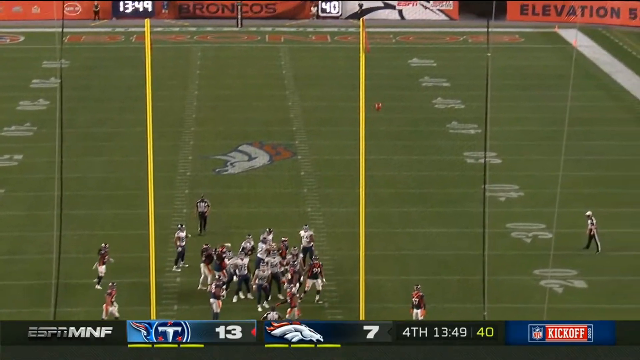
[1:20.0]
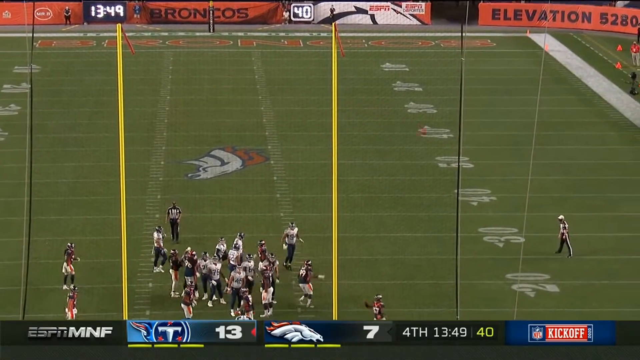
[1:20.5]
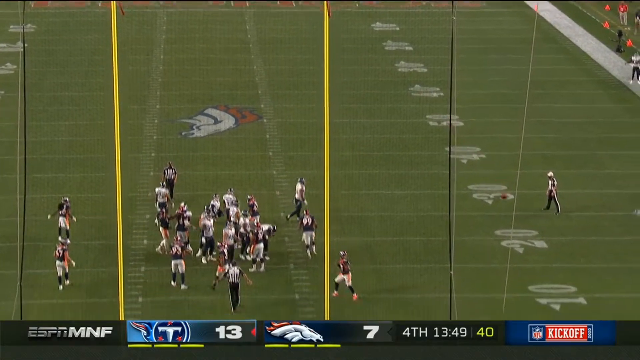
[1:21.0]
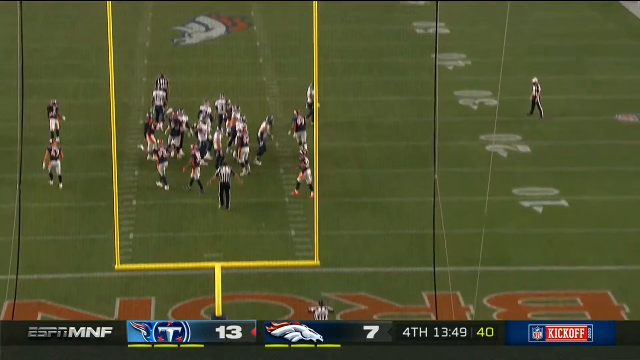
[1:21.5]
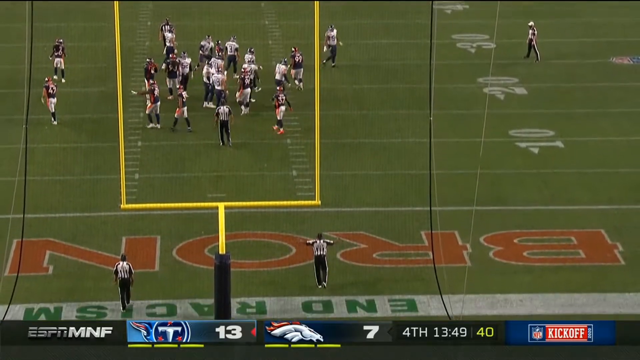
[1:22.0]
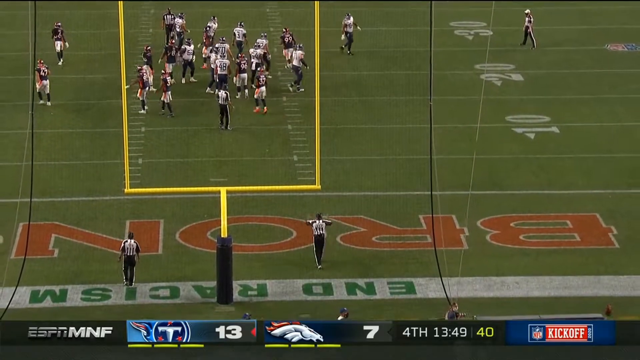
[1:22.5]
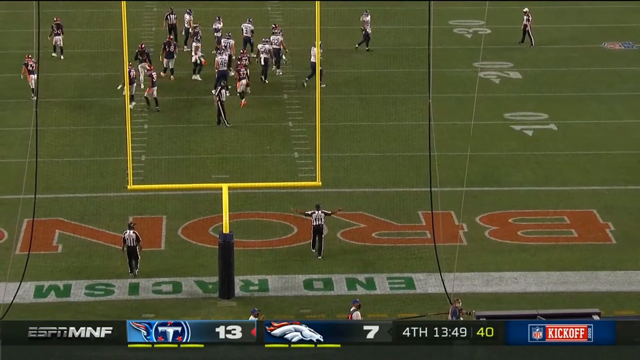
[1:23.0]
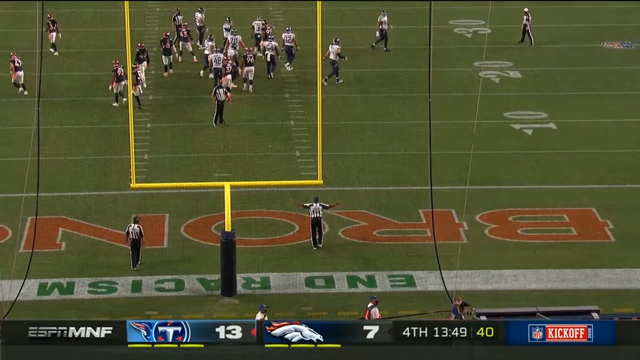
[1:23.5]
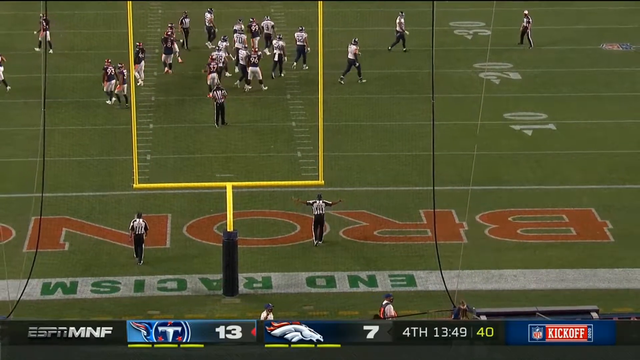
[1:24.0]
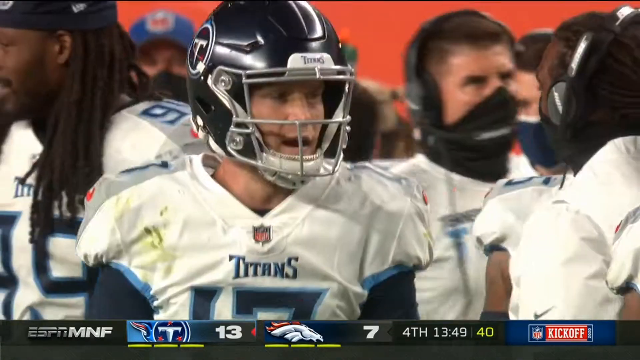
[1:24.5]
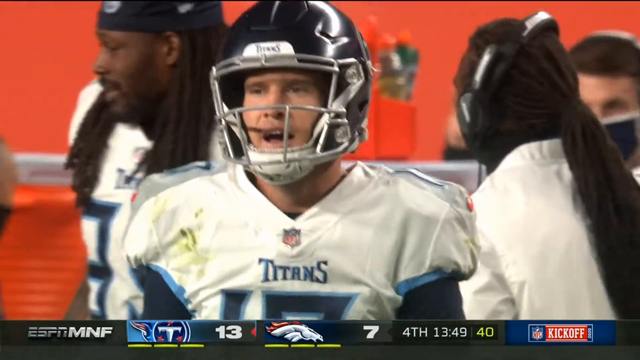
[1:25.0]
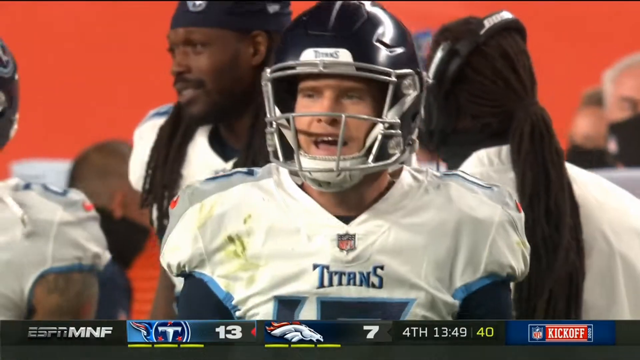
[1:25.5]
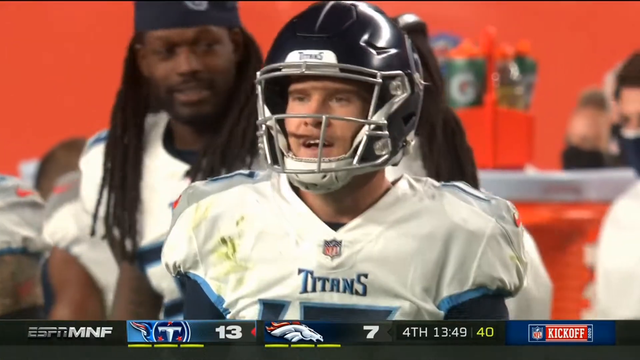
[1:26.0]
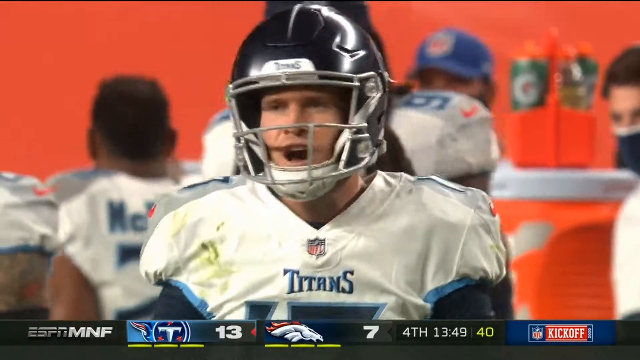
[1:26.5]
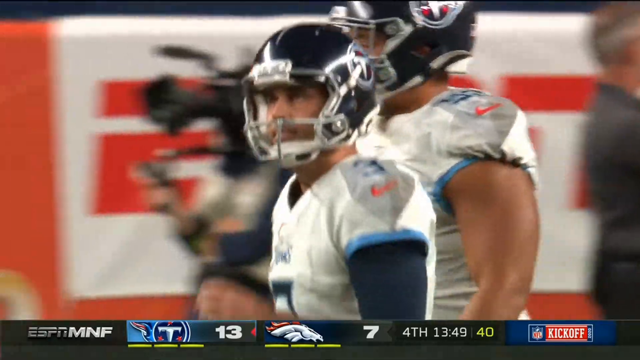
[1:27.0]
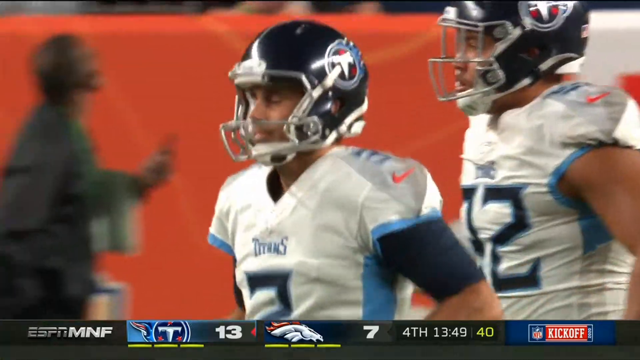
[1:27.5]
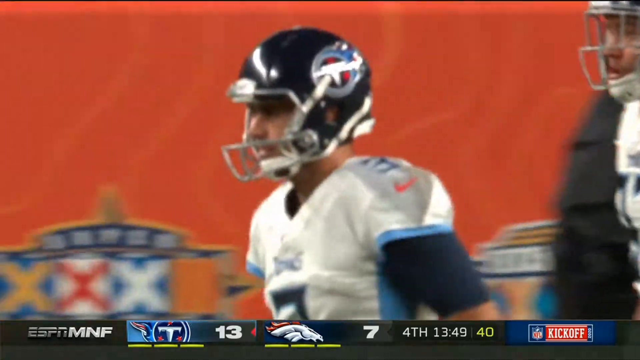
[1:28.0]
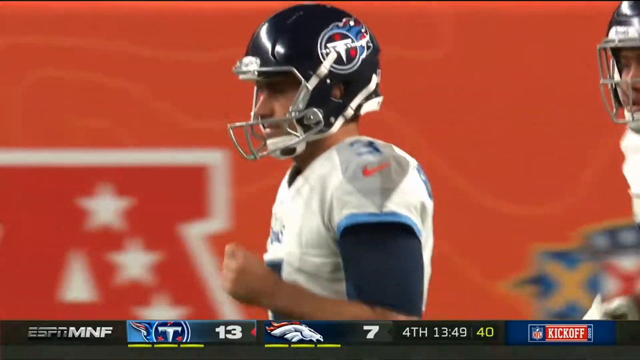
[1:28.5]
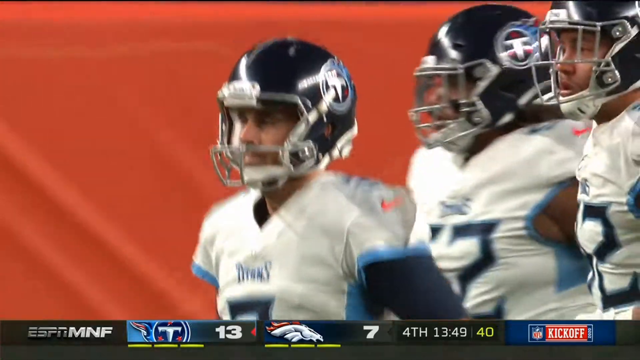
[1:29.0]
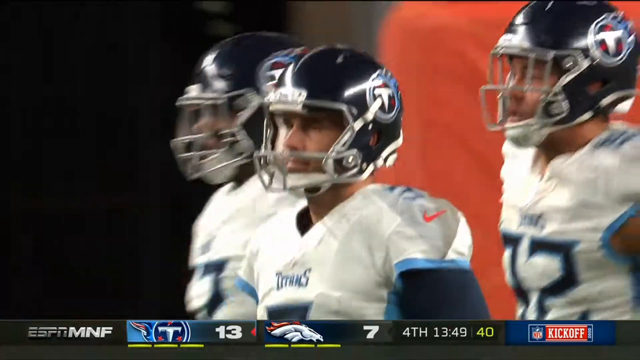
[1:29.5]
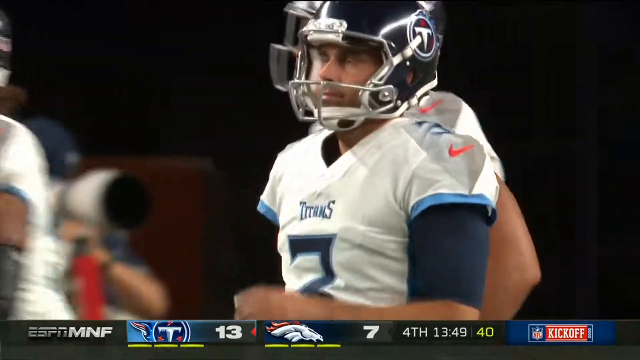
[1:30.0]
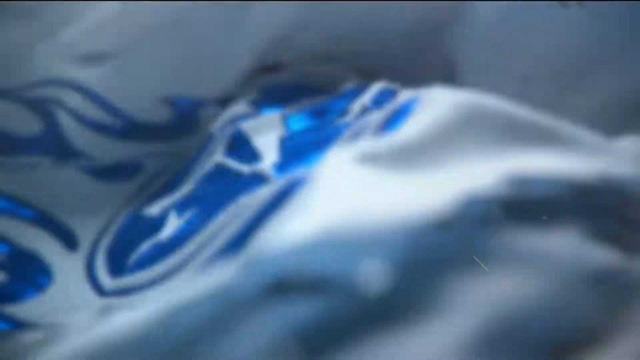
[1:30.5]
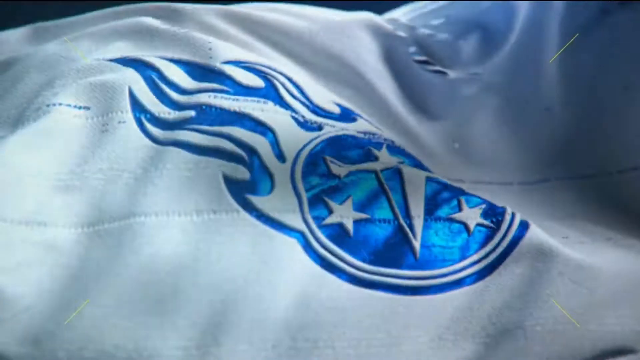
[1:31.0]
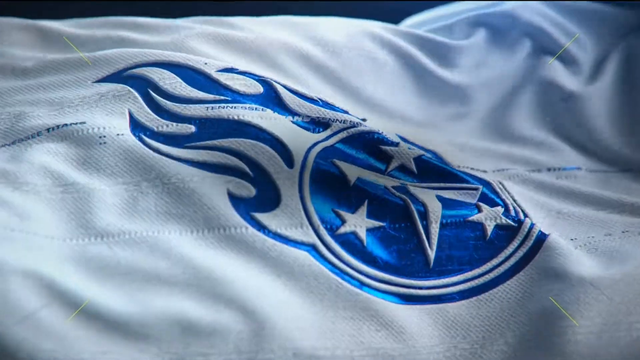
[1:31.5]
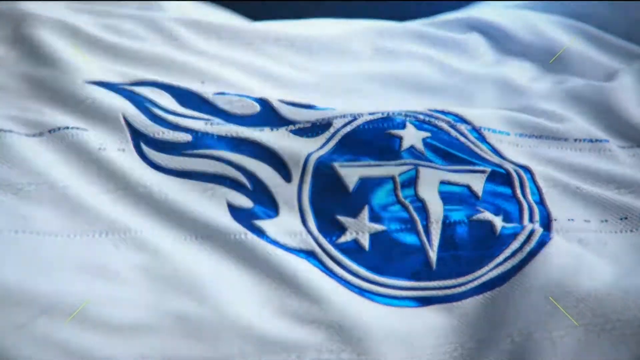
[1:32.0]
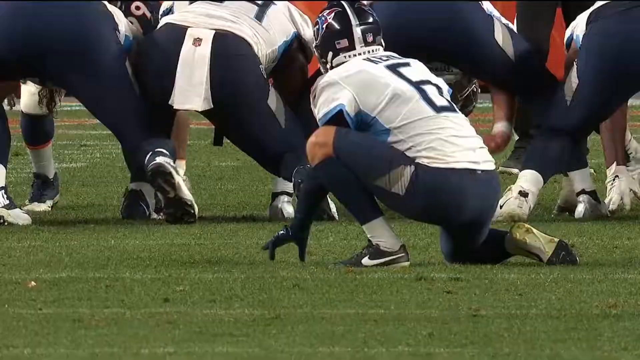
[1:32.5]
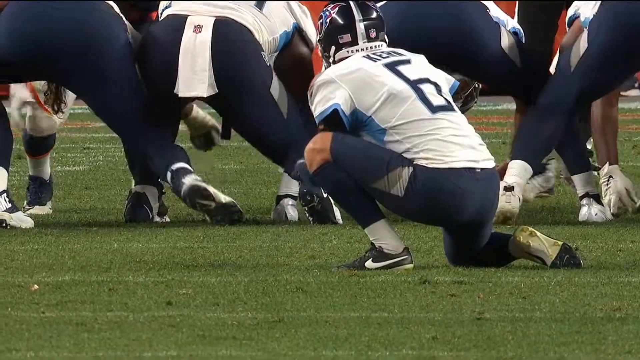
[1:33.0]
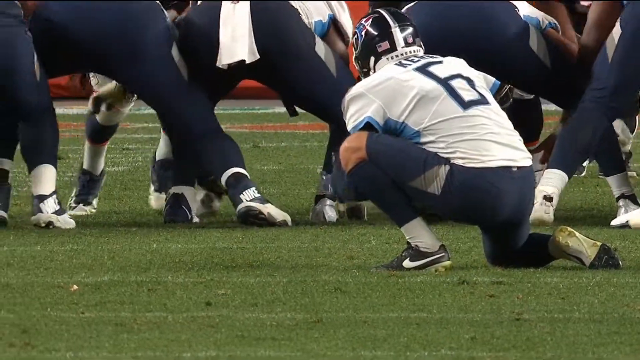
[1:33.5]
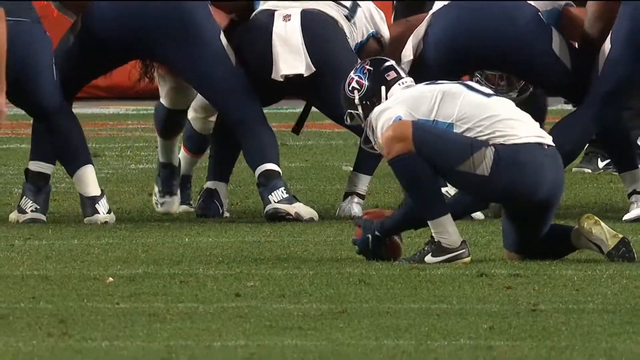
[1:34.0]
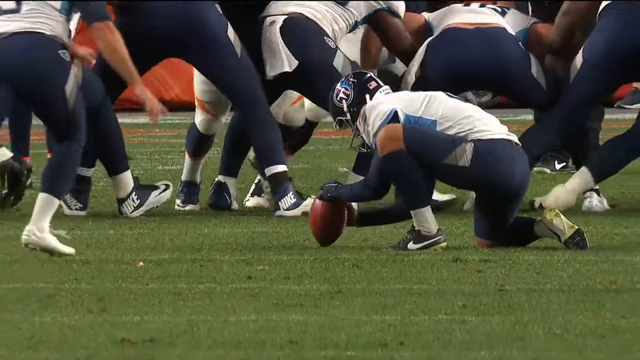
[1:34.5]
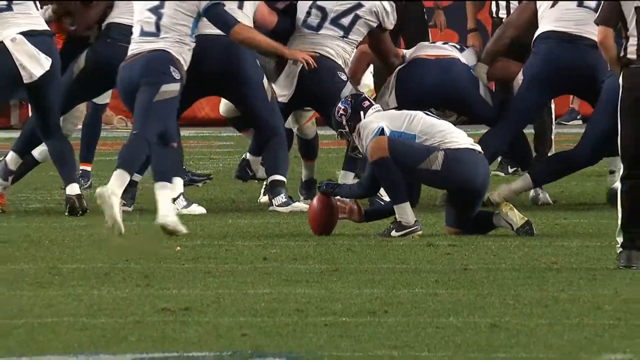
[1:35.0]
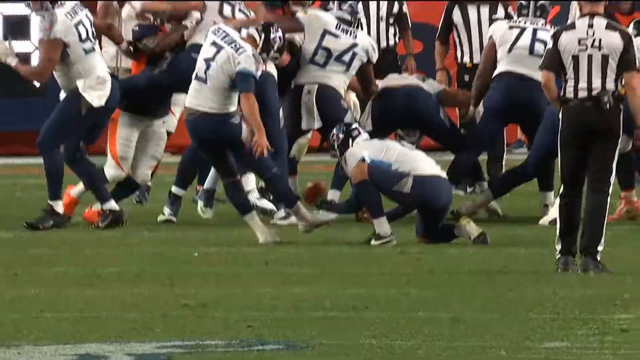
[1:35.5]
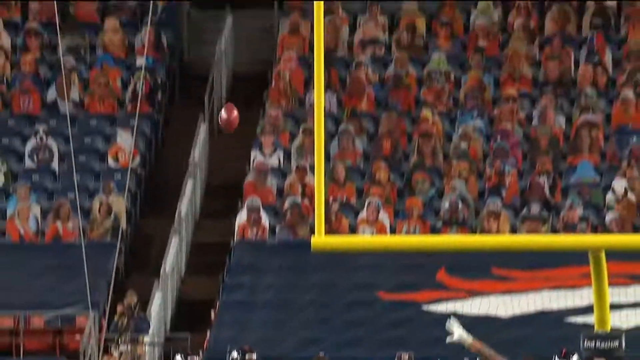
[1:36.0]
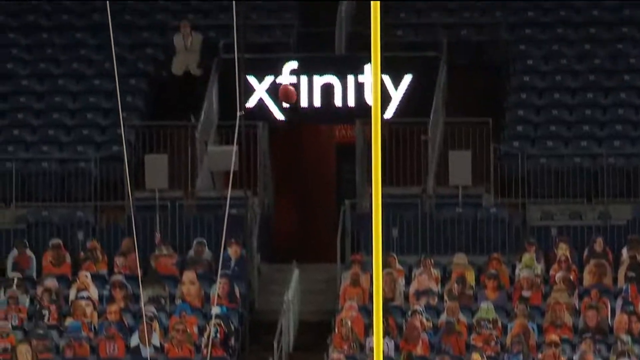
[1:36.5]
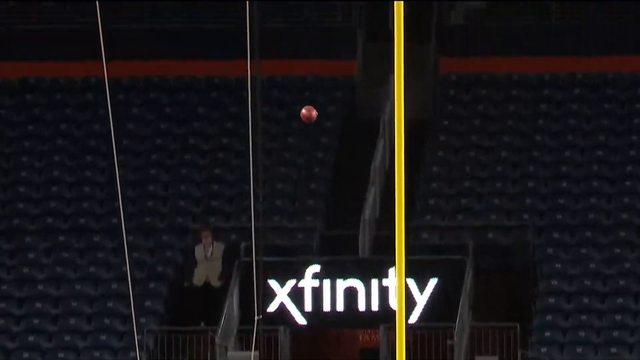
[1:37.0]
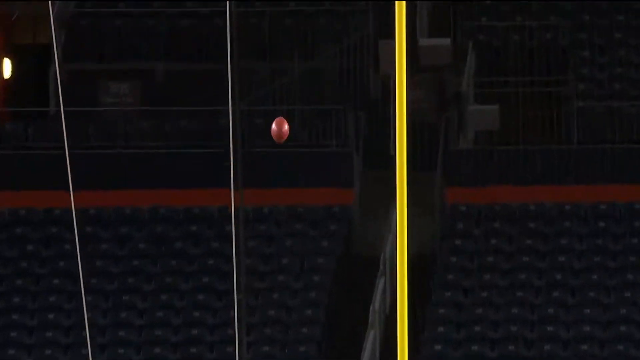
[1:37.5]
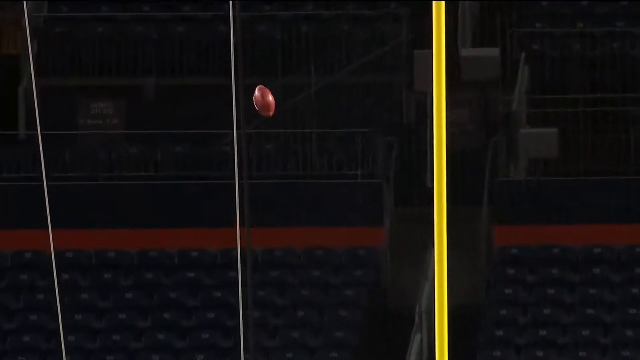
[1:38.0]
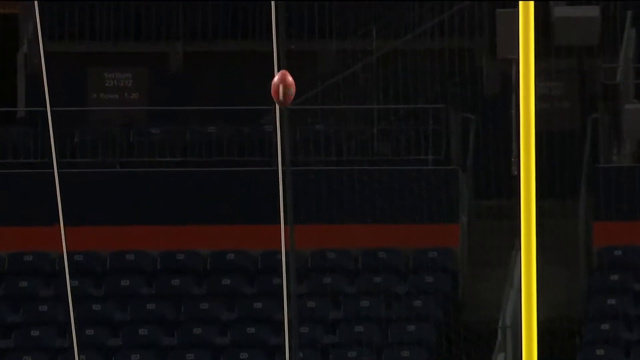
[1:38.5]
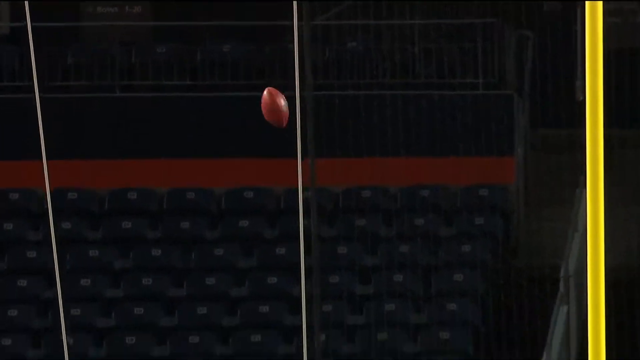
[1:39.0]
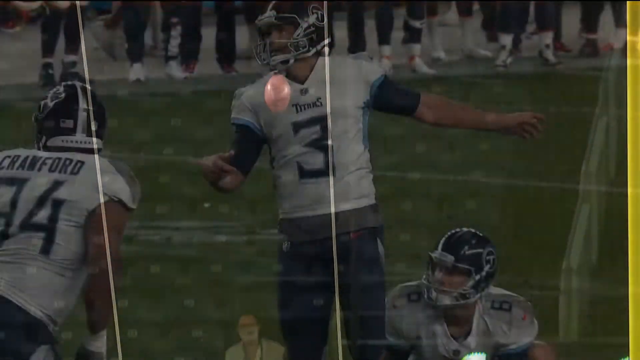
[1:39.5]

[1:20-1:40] A replay of the kick is shown. A transition follows showing the ESPN MNF logo together with the Tennessee Titans logo with its Titan symbol and the Denver Broncos logo. Text at the bottom reads "Desktop 2020-9-15", and a pause button appears in the center. The game moves to the fourth quarter, where the Tennessee Titans lead with 13 points and Denver trails by 6. A Titans scoring drive is displayed: 15 plays, 82 yards, and a drive time of 7 minutes and 2 seconds. It is the fourth quarter with 13 minutes and 49 seconds left and 5 seconds on the game clock. The kicker misses a field goal attempt far right, and the Titans quarterback looks on in disbelief, unhappy with the kicker. A replay of the kick follows.